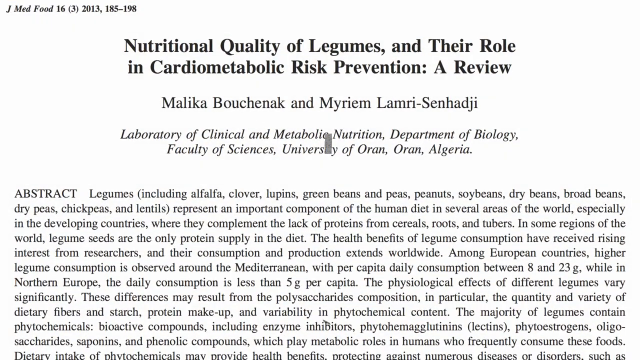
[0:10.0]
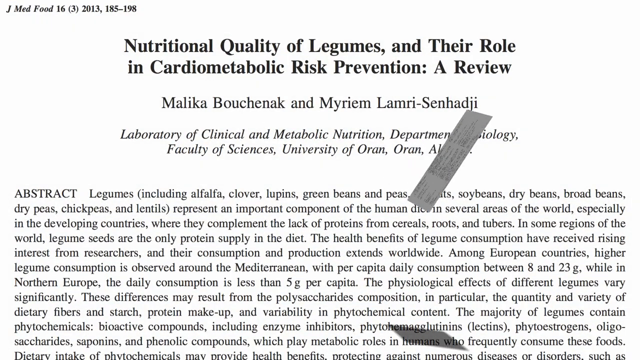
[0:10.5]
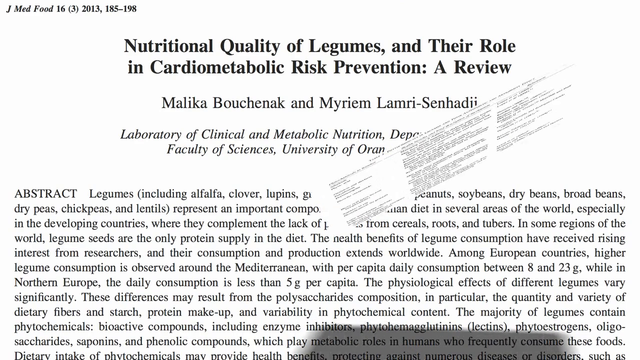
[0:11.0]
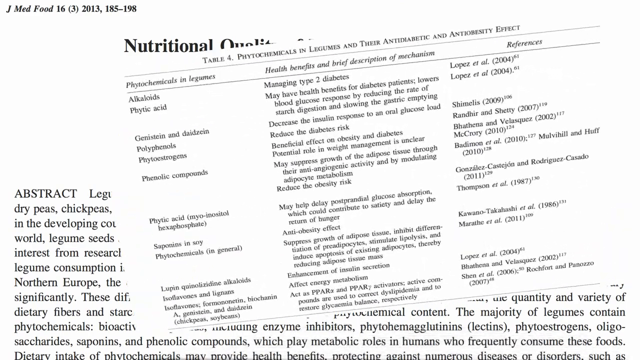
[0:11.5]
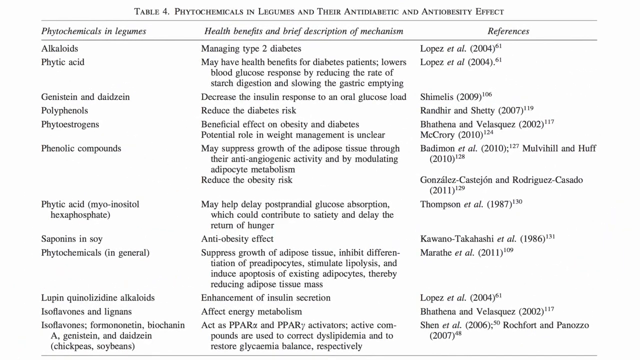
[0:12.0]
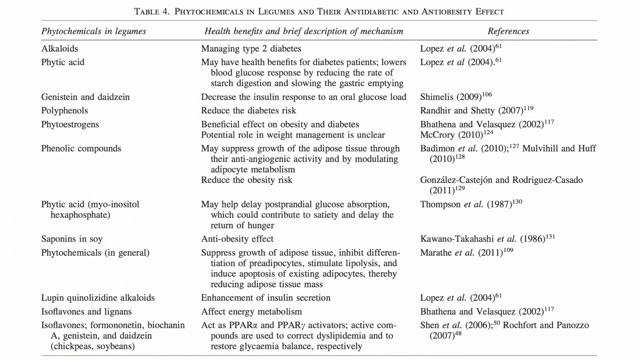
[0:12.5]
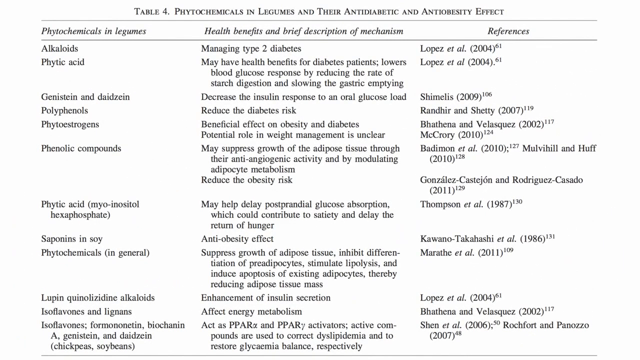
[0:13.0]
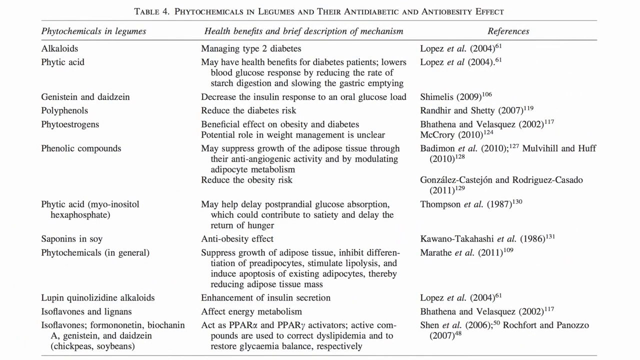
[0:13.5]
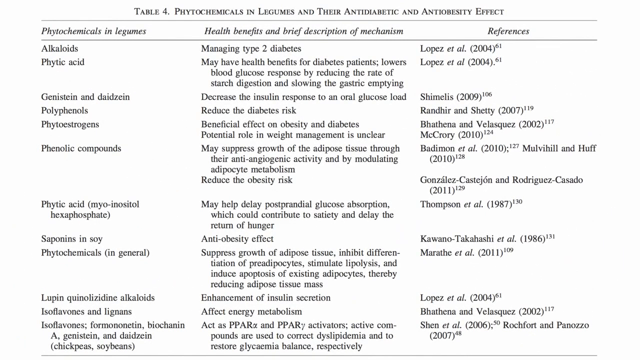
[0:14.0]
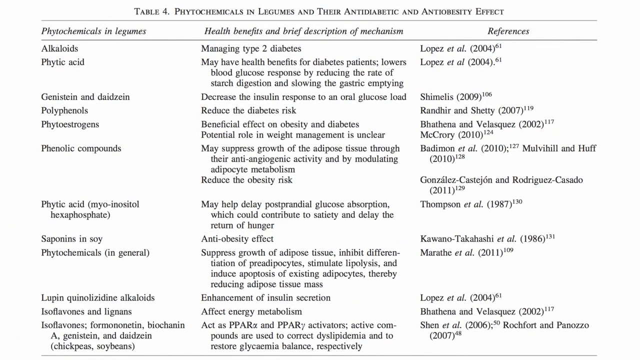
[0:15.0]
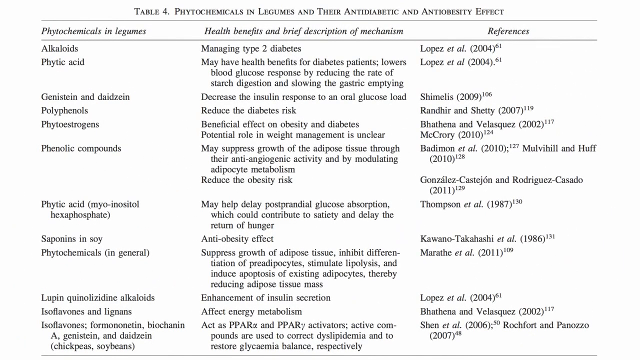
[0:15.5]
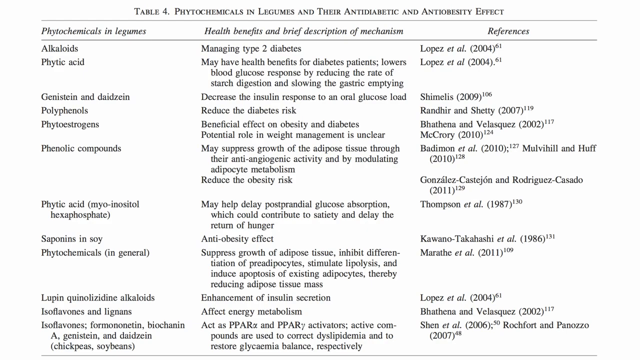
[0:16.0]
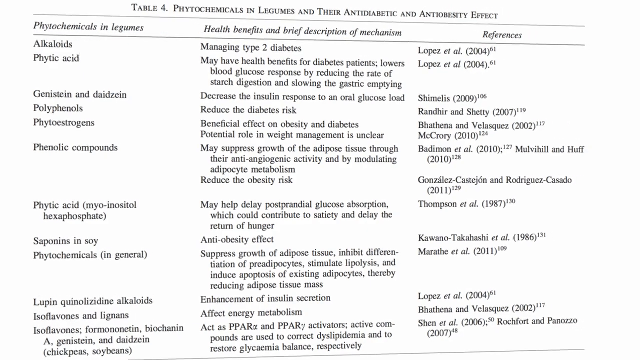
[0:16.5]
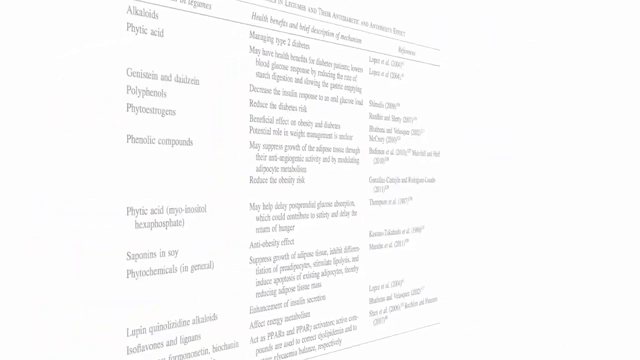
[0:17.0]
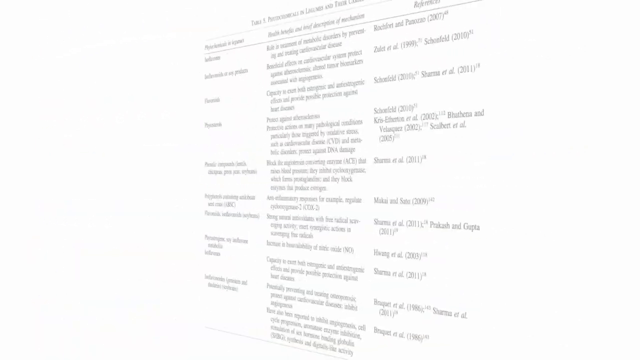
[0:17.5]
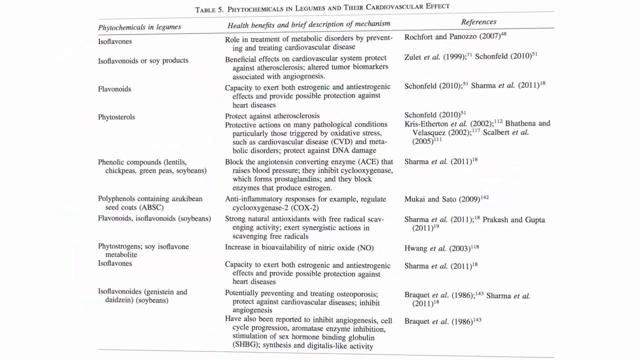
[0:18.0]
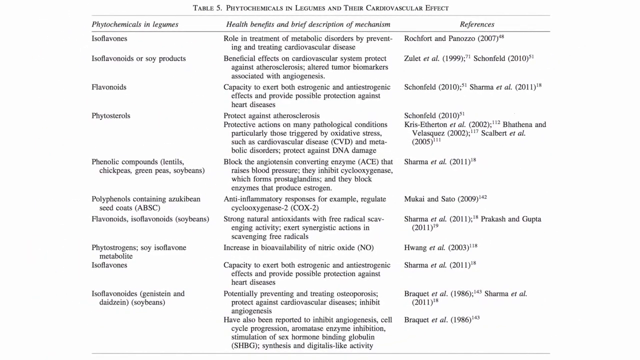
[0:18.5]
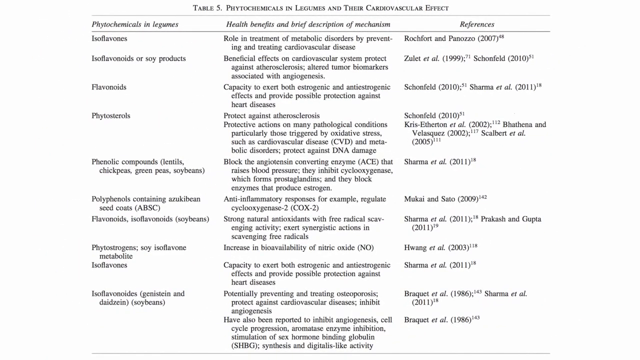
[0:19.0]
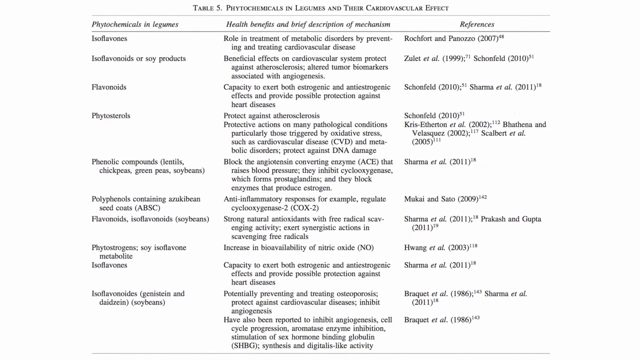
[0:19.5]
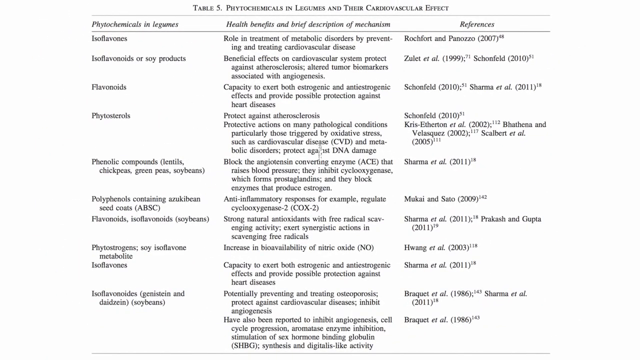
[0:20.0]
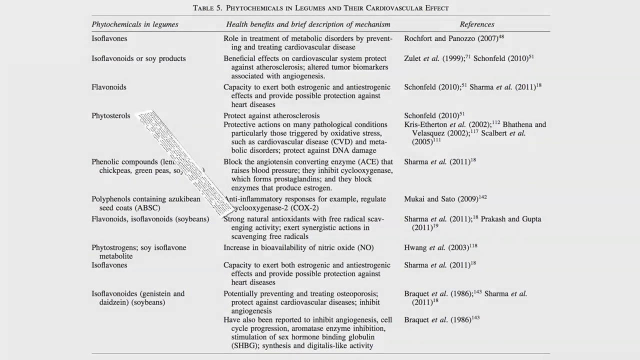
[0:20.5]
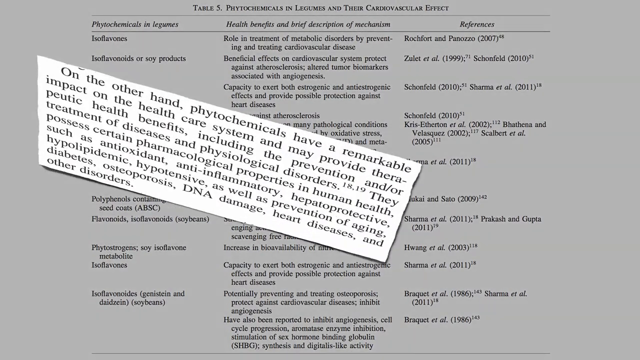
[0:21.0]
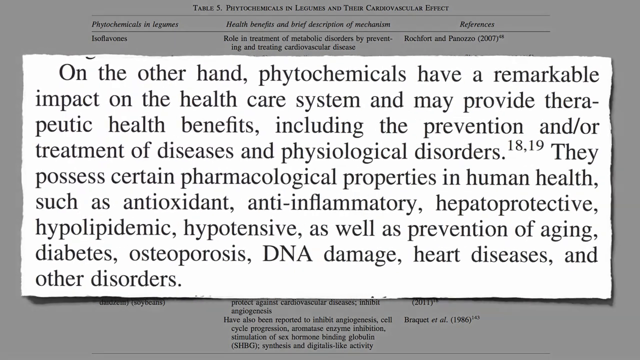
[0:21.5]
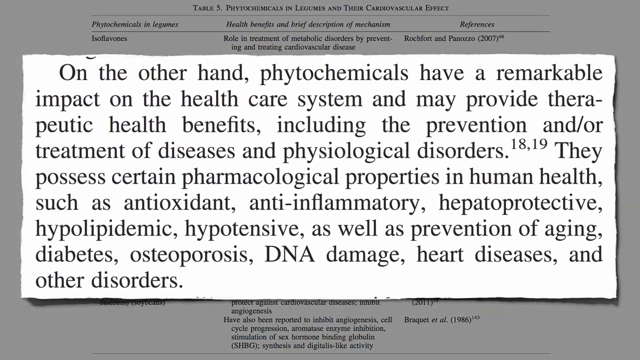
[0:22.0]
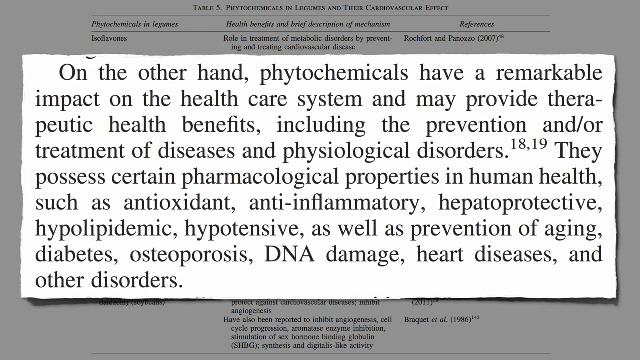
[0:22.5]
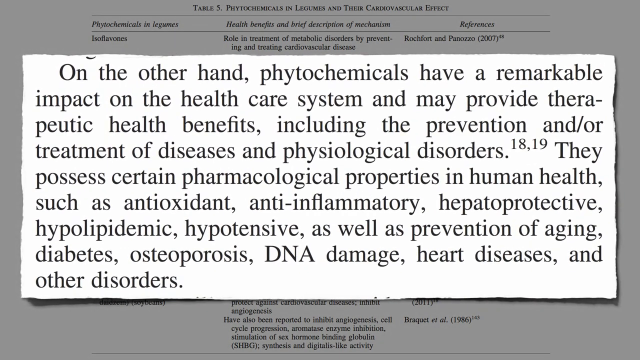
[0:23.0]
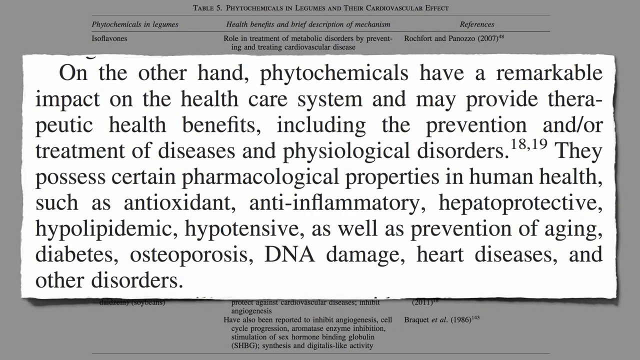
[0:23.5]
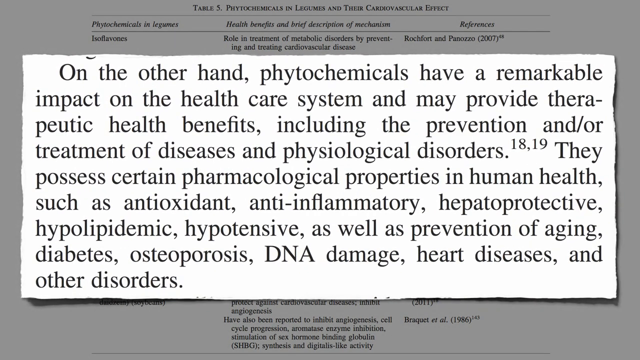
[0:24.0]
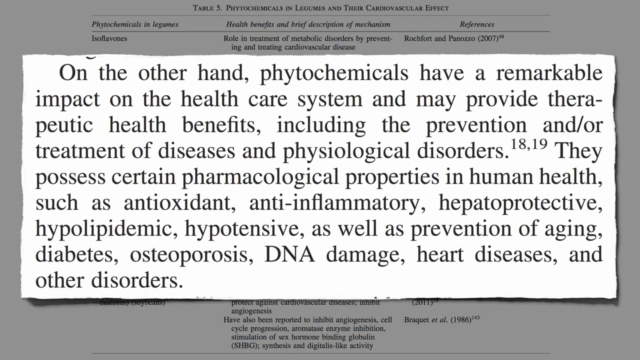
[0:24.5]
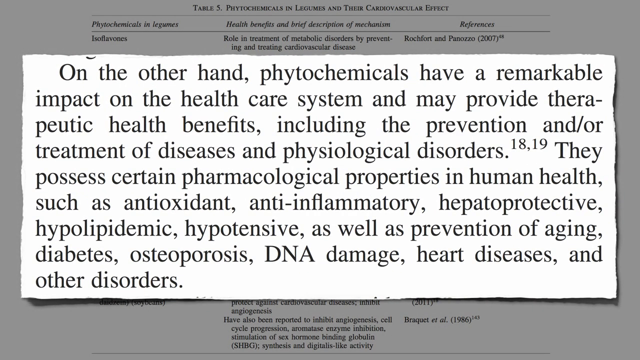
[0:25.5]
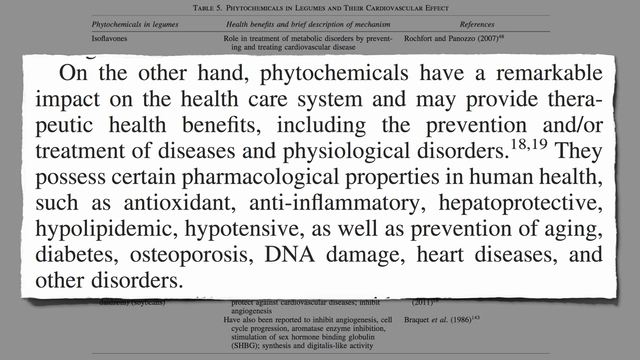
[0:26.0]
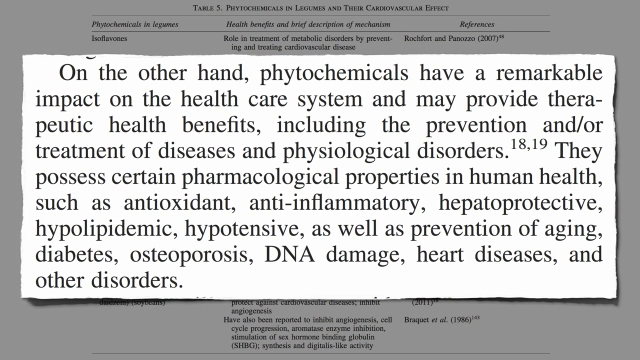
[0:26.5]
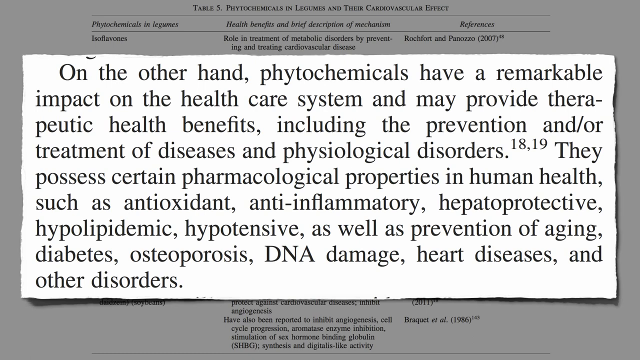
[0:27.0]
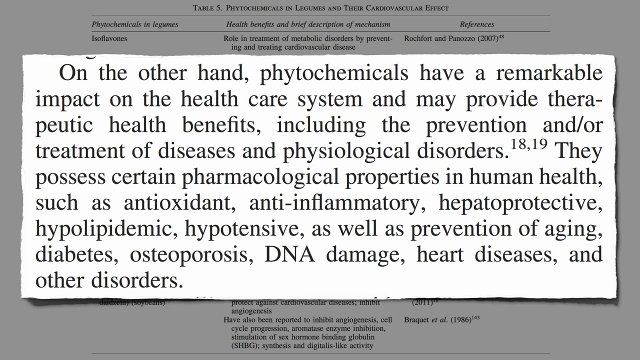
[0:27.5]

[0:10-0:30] A paper from the J. Med Food journal is on screen, titled "Nutritional quality of legumes and their role in cardiometabolic risk prevention, a review". The authors are Malika Bouchenak and Myriem Lamri-Senhadji, whose last name is hyphenated. The affiliation reads "Laboratory of Clinical and Metabolic Nutrition, Department of Biology, Faculty of Sciences, University of Oran, Oran, Algeria". An abstract about legumes gives amounts in different regions and a daily consumption in Northern Europe of around five grams per capita. Another portion of the paper appears, mostly references, listing different types of legumes and what they are good for, such as managing type two diabetes or reducing diabetes risk. Another page follows with the same kind of information for more legumes. A portion is then highlighted that reads "on the other hand, phytochemicals have a remarkable impact on our healthcare system and may provide therapeutic health benefits, including the prevention and or treatment of diseases and physiological disorders. They process certain pharmacological properties in human health, such as antioxidant, anti-inflammatory, hepatoprotective, hypolipidemic, hypotensive, as well as prevention of aging, diabetes, osteoporosis, DNA damage, heart diseases, and other disorders."